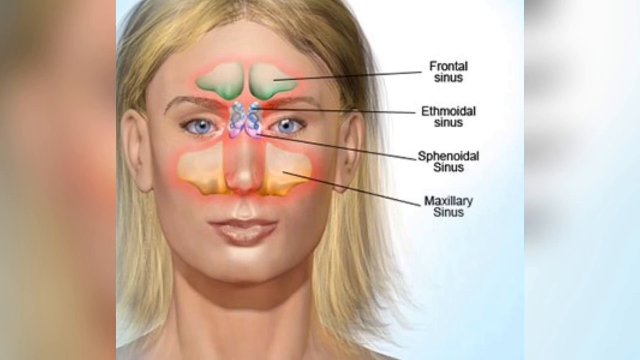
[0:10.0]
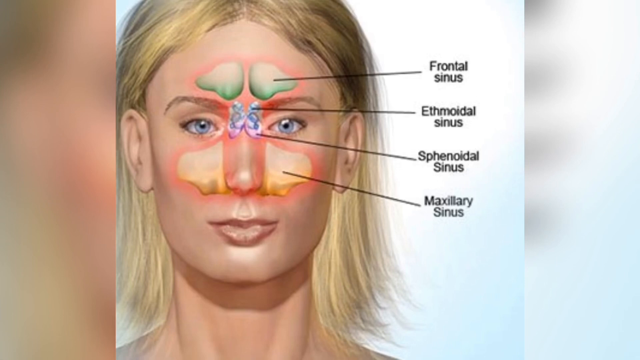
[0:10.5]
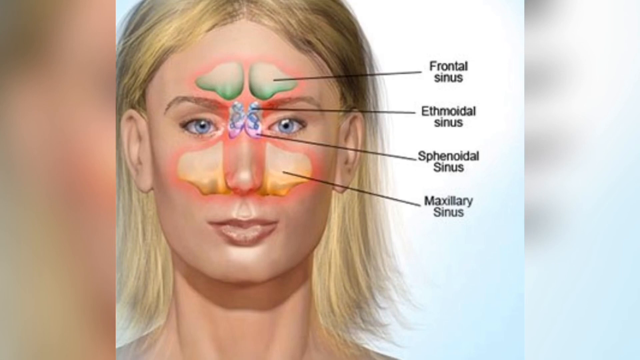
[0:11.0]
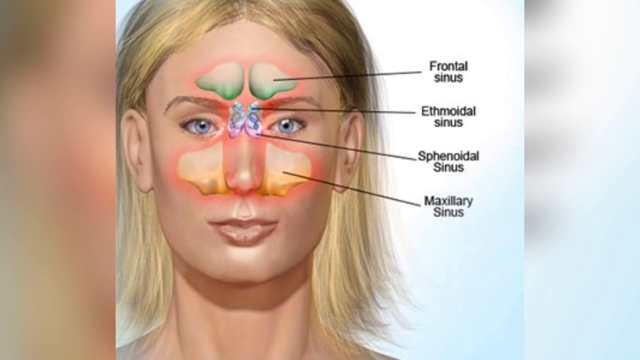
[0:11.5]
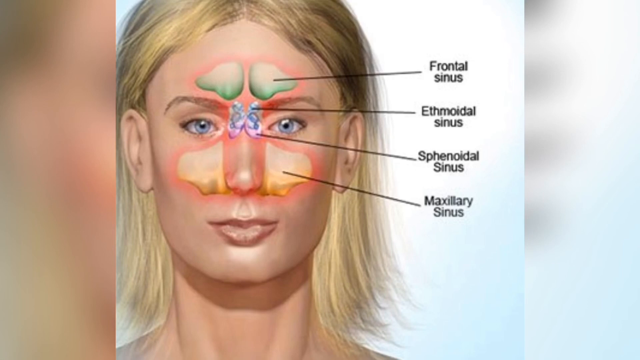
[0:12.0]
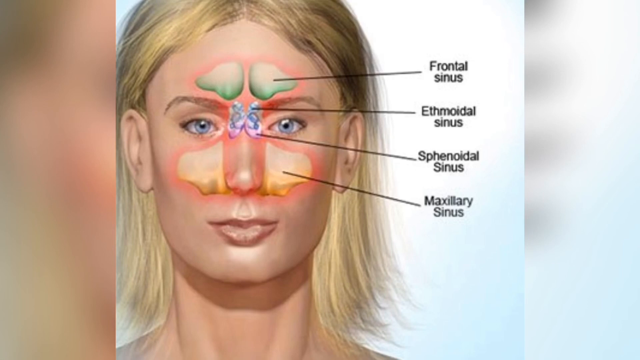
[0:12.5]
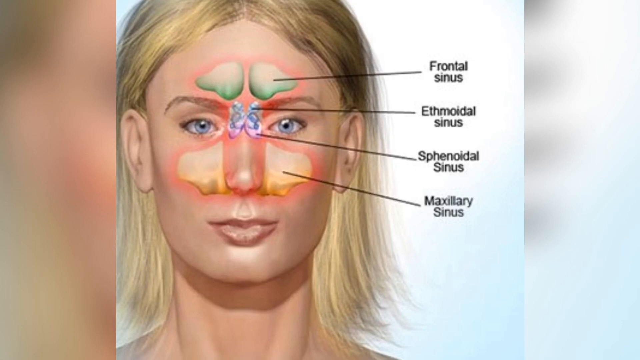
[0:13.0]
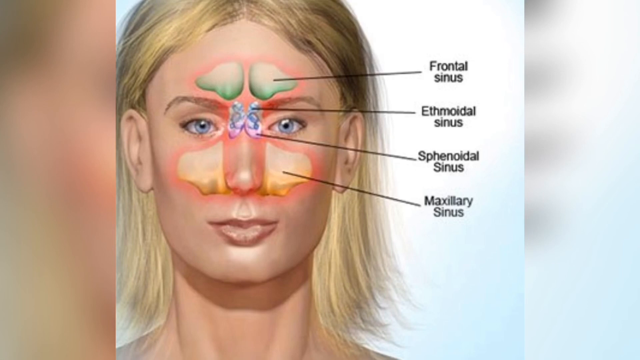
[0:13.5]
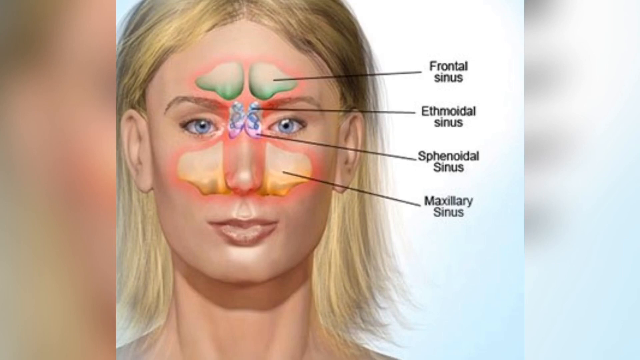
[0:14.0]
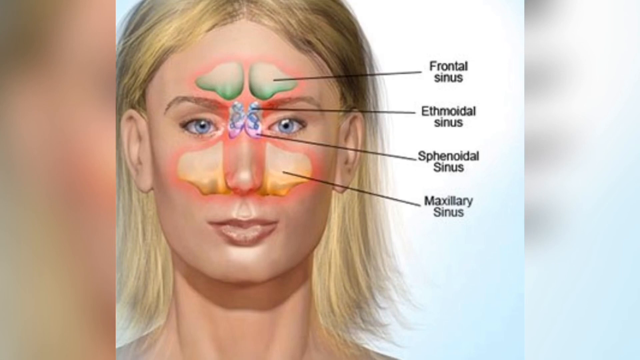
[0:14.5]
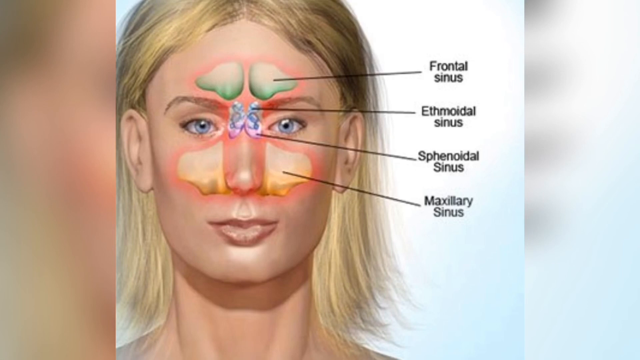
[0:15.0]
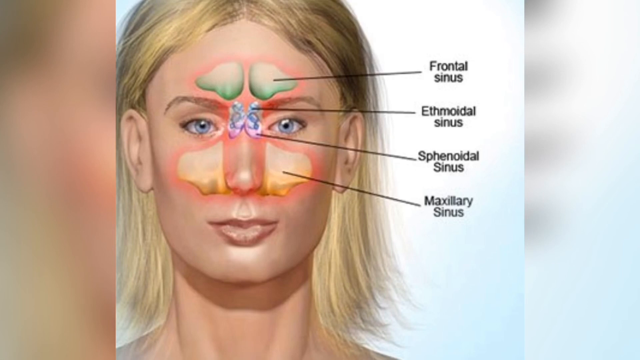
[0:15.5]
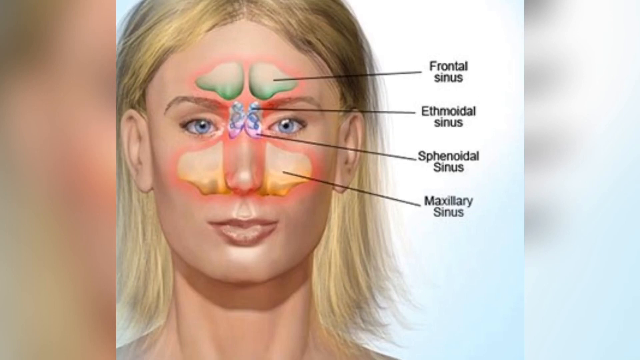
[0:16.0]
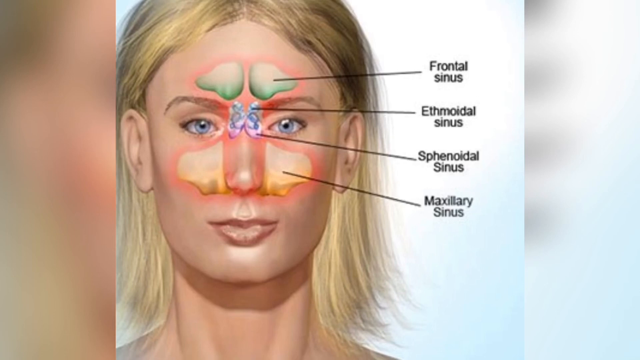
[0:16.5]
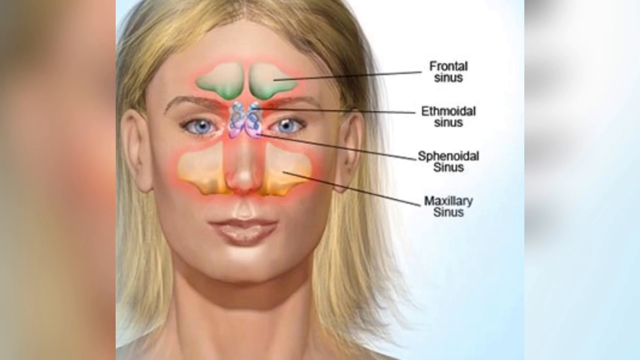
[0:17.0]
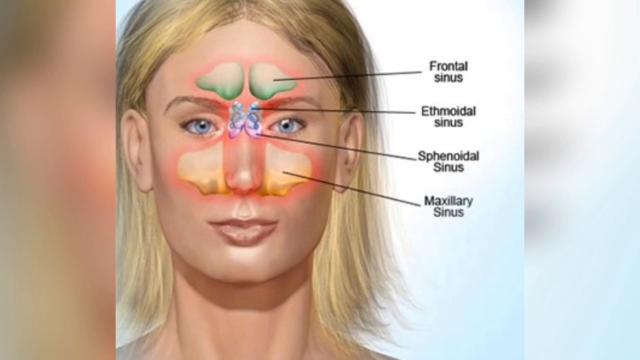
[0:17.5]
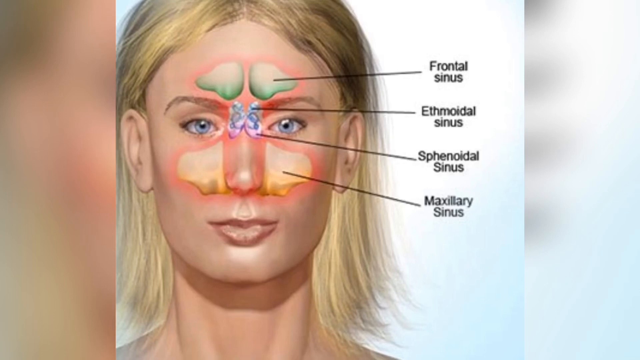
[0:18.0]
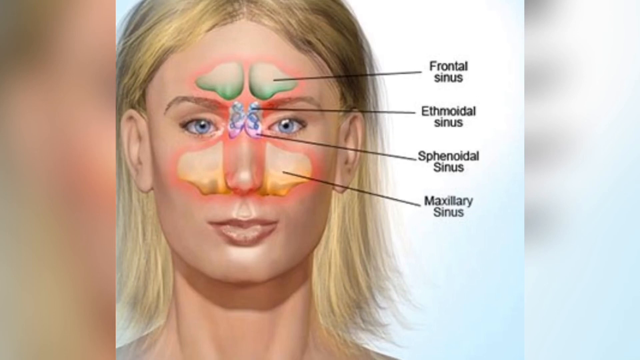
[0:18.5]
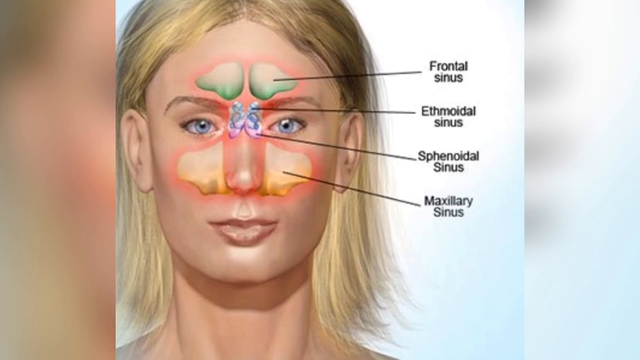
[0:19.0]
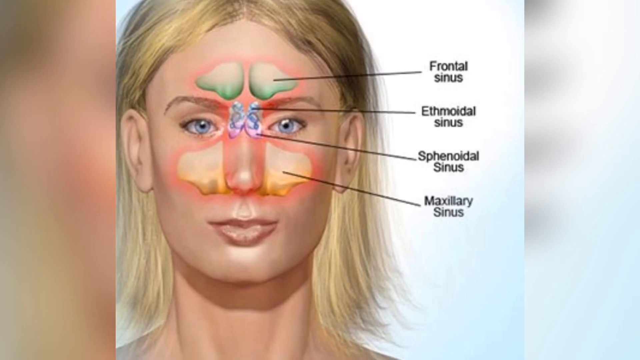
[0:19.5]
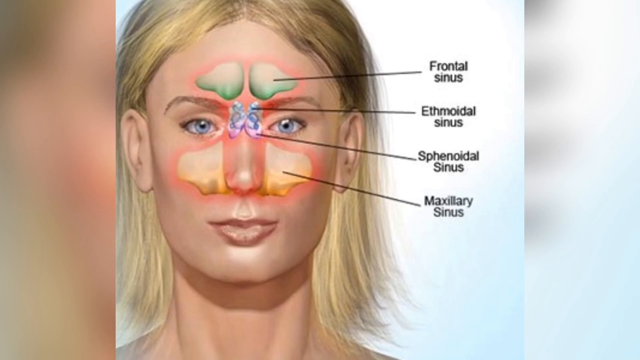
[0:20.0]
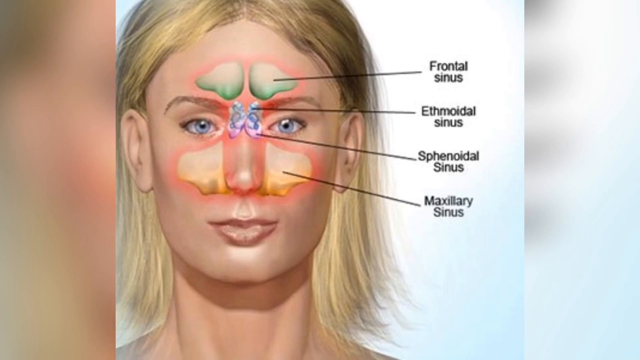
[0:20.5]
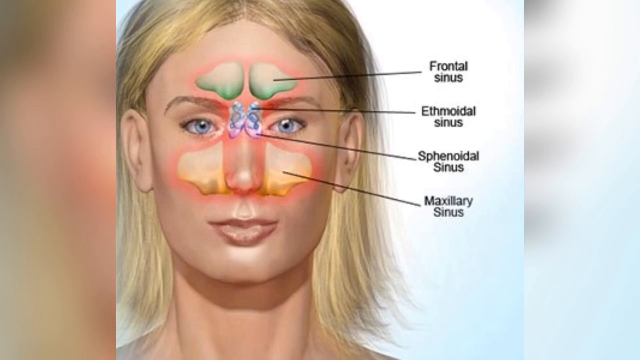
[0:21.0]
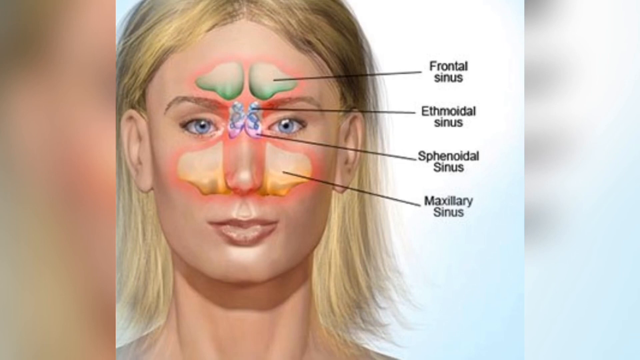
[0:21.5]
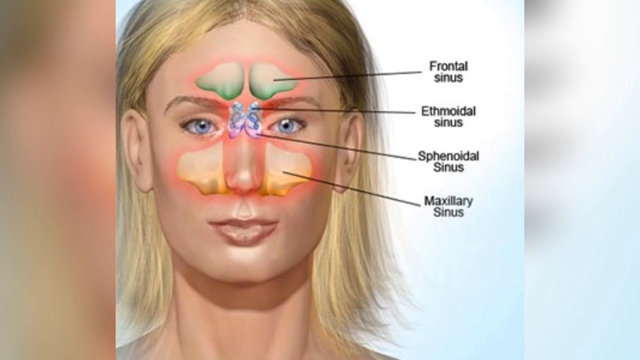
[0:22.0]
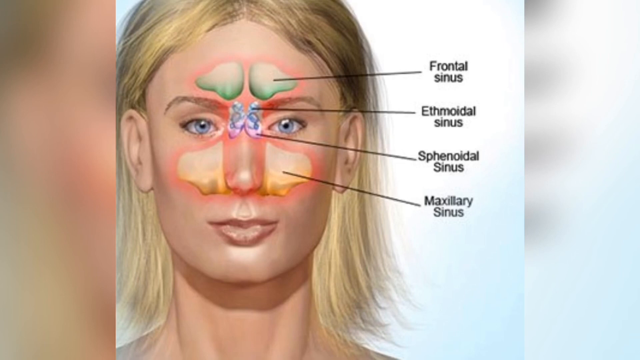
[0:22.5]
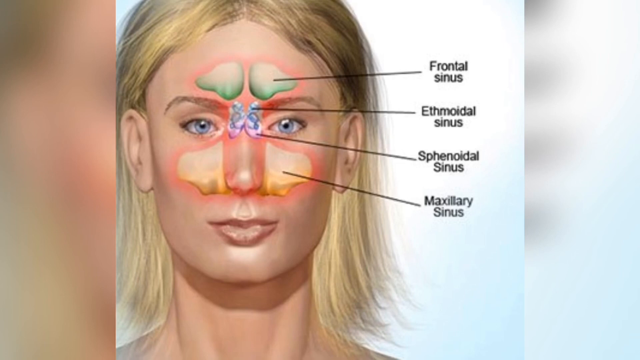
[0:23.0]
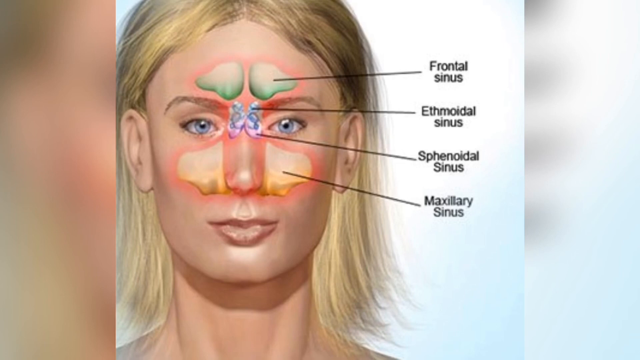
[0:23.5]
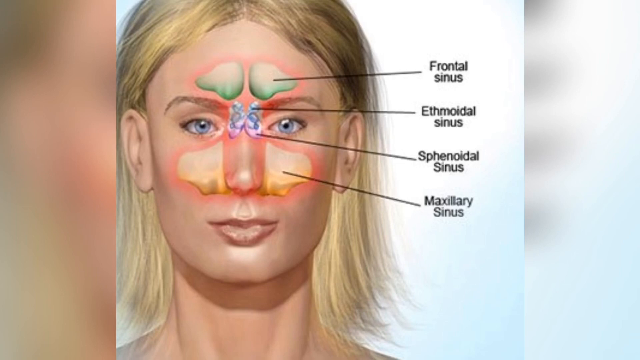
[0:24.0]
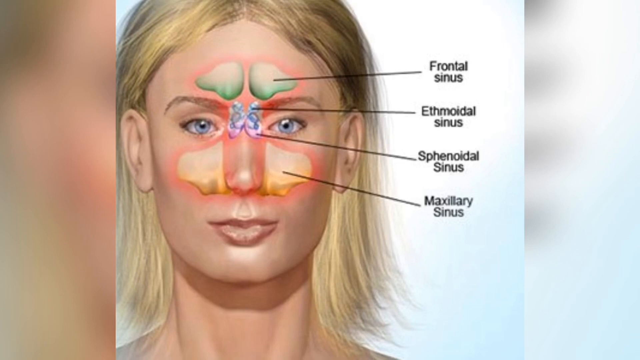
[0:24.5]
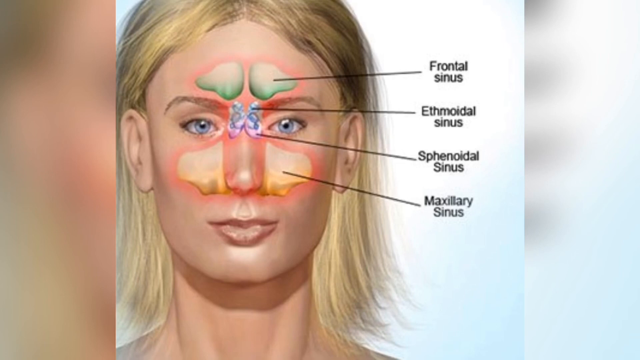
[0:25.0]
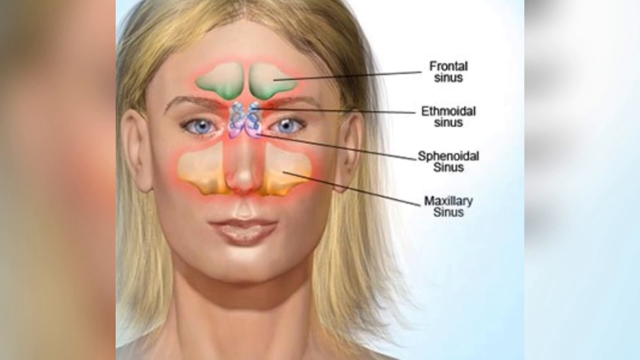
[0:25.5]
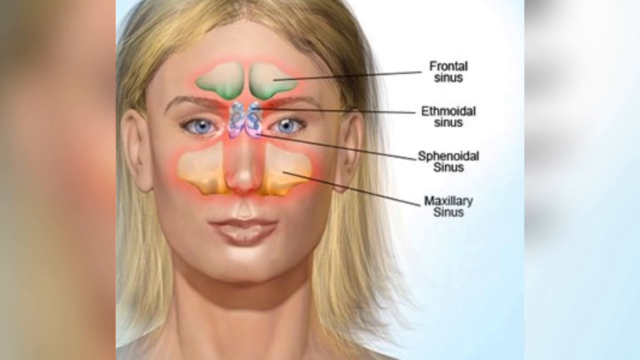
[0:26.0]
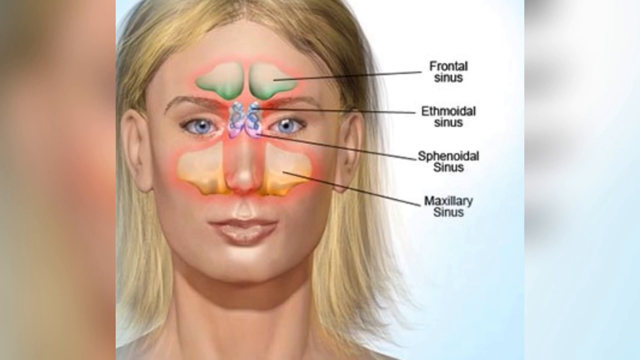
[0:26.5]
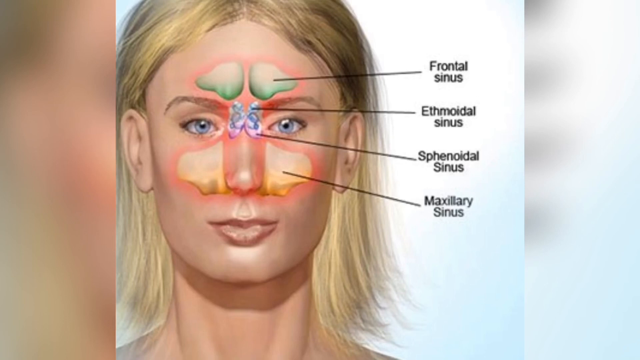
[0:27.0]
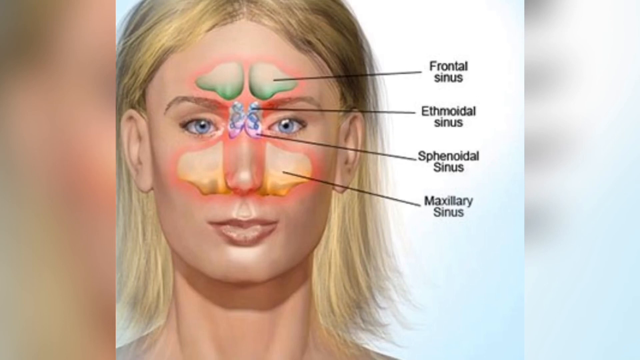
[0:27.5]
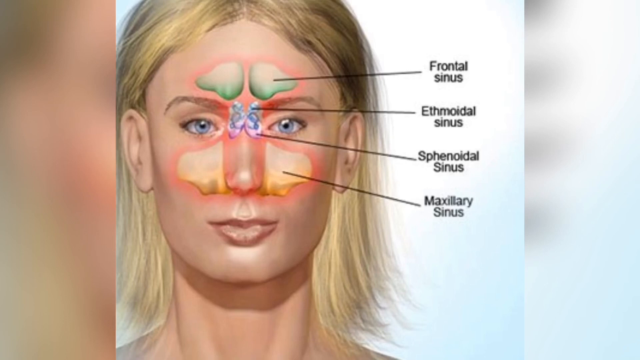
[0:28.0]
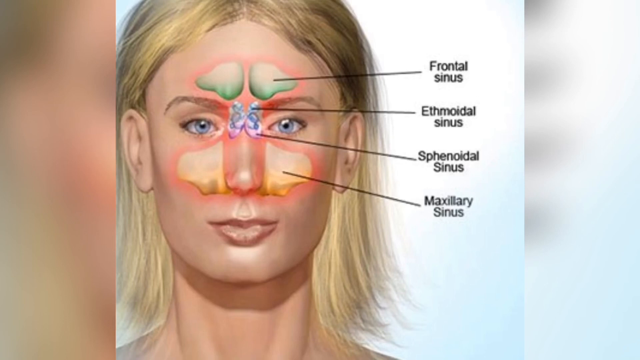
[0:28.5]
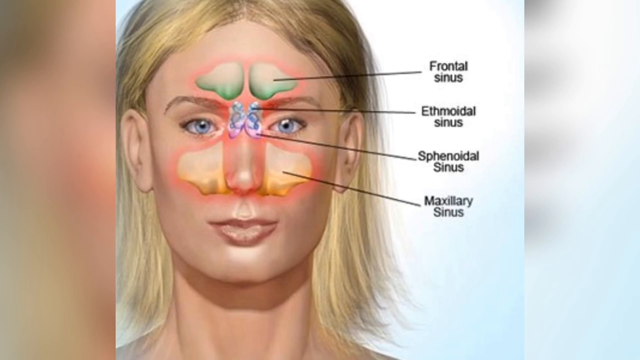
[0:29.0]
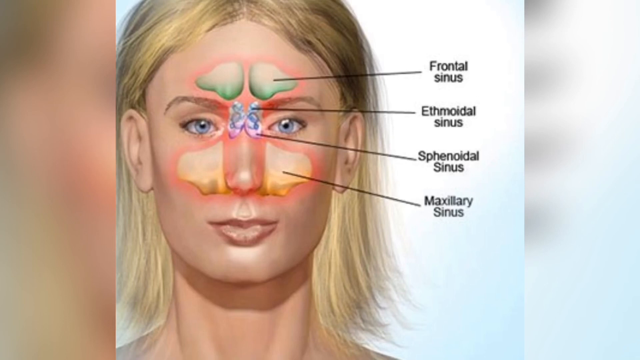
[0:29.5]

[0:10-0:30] A picture of a woman's face, a drawing or computer-generated image rather than a photo, is set against a white background. Four of her sinuses are labeled. The frontal sinus, colored green, is located behind her forehead underneath the skin and bone. The ethmoidal sinus is between the eyebrows. The sphenoidal sinus is between the eyes, at the top or bridge of the nose. The maxillary sinuses, on the left and right sides of the nose, are much larger and colored yellow. The woman is blonde with blue eyes; her ears are visible and her hair goes down to her shoulders. There is a reddening around each of these affected areas, apparently to signify discomfort.